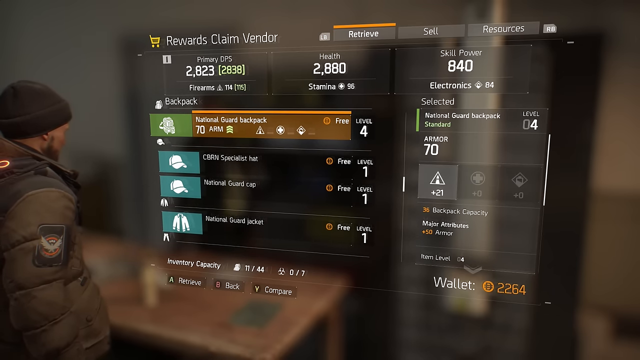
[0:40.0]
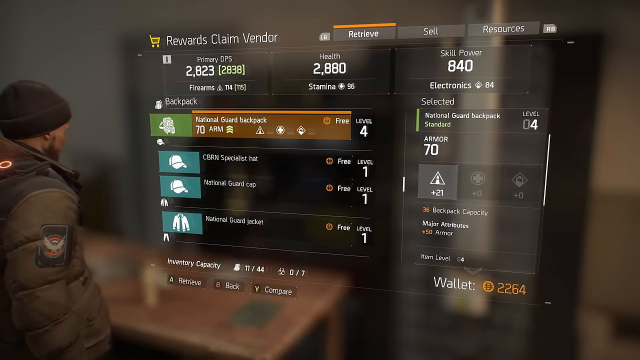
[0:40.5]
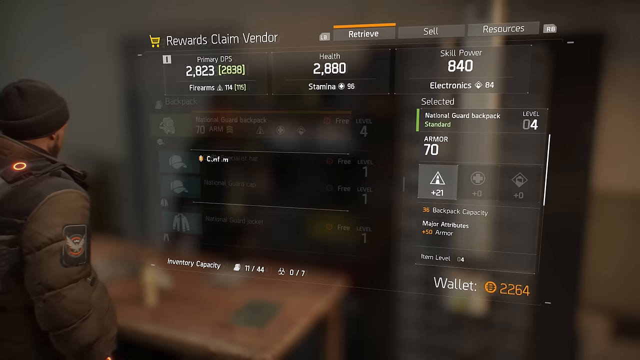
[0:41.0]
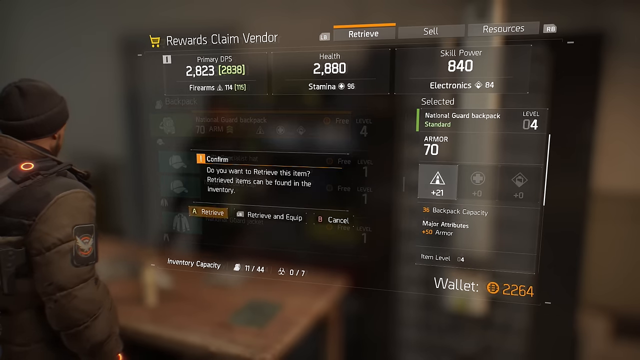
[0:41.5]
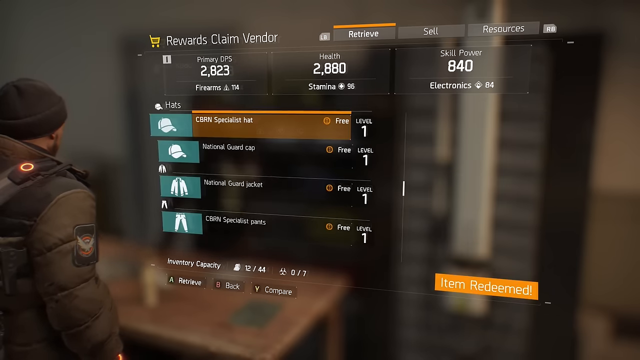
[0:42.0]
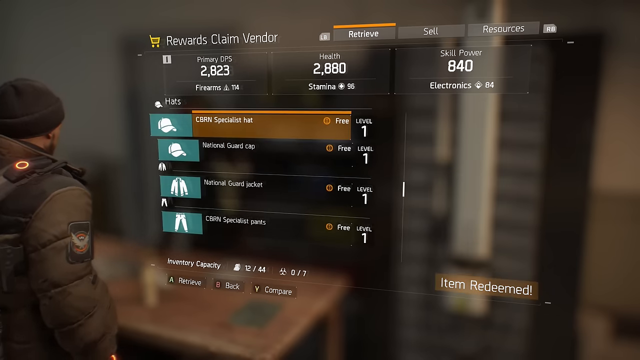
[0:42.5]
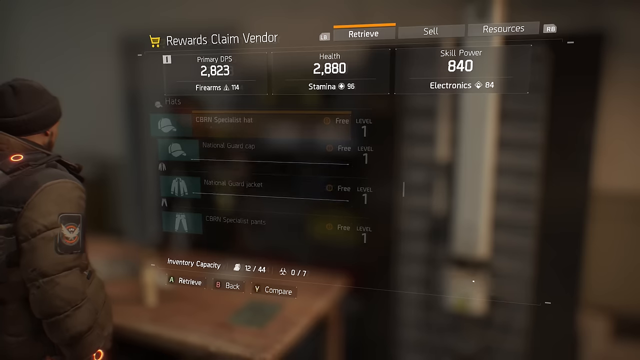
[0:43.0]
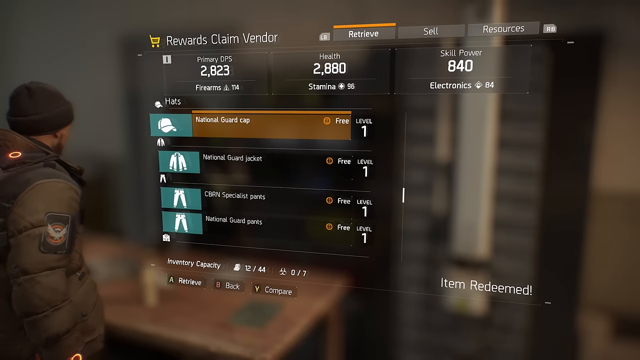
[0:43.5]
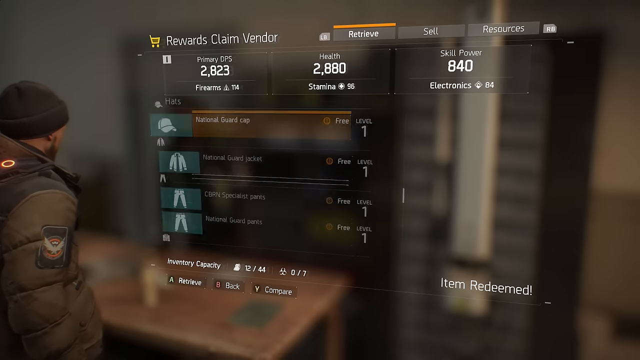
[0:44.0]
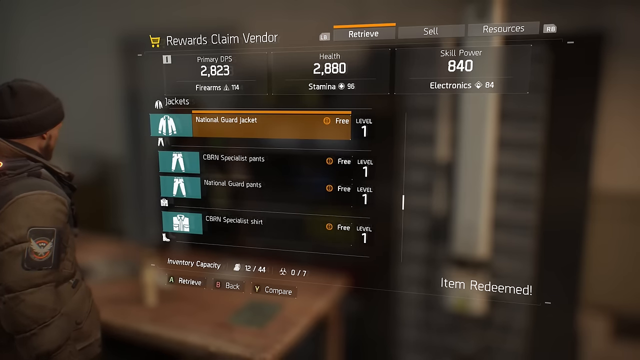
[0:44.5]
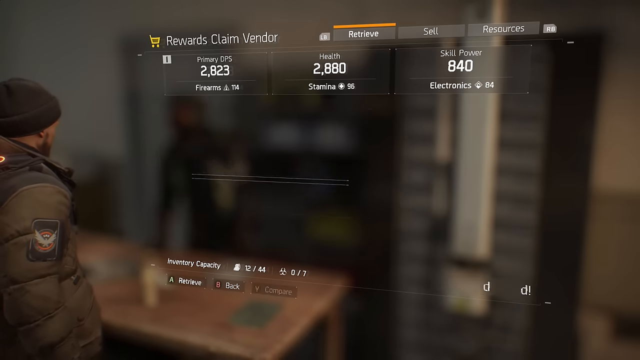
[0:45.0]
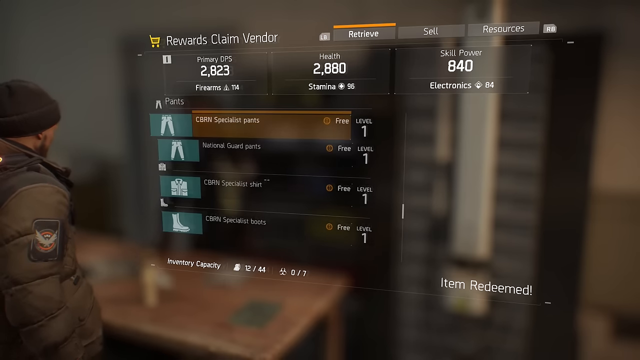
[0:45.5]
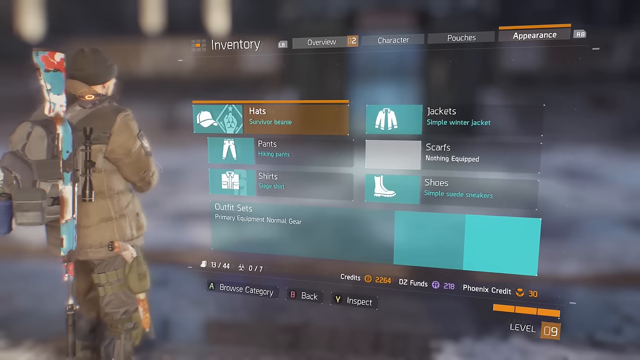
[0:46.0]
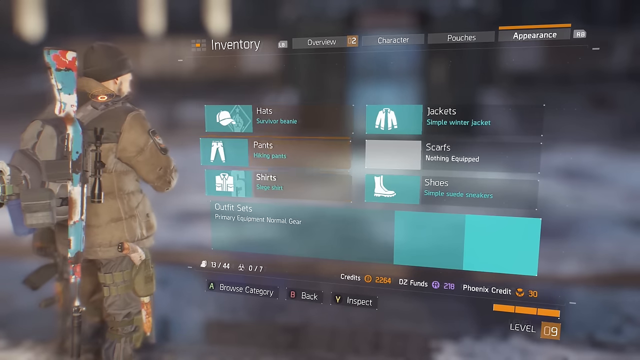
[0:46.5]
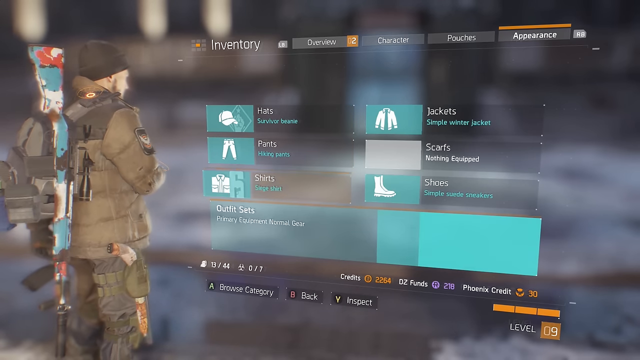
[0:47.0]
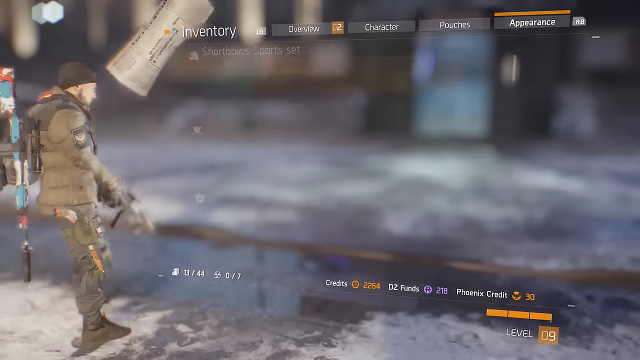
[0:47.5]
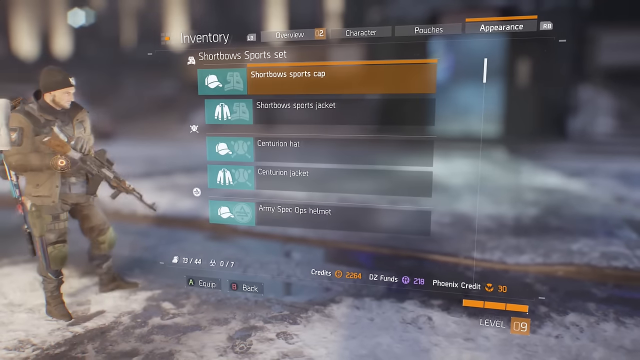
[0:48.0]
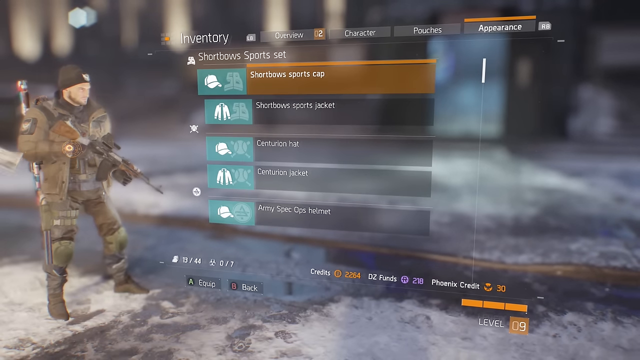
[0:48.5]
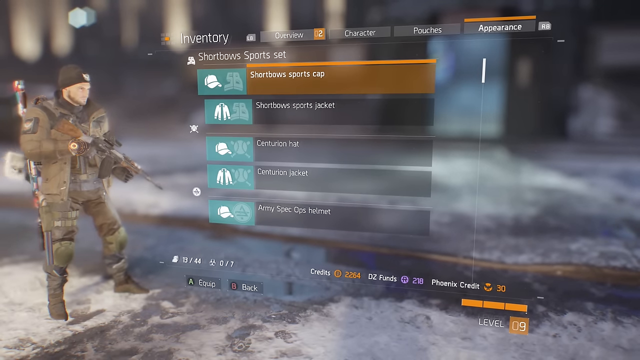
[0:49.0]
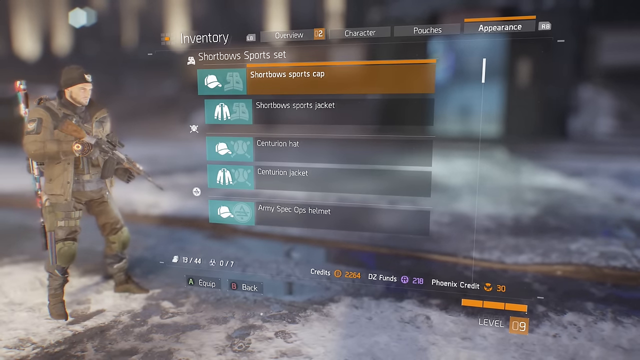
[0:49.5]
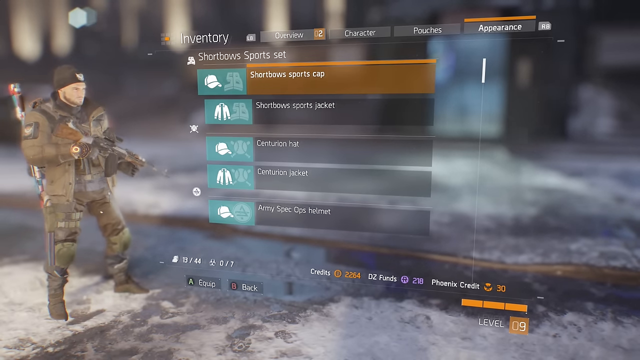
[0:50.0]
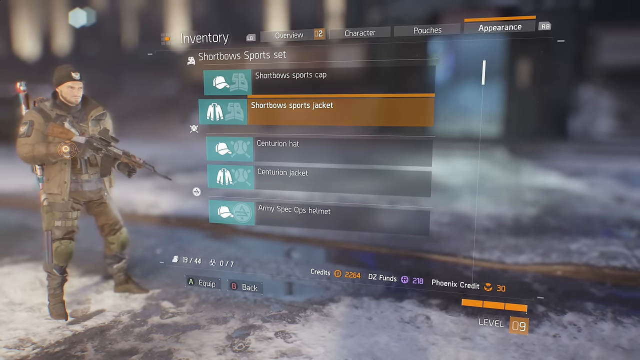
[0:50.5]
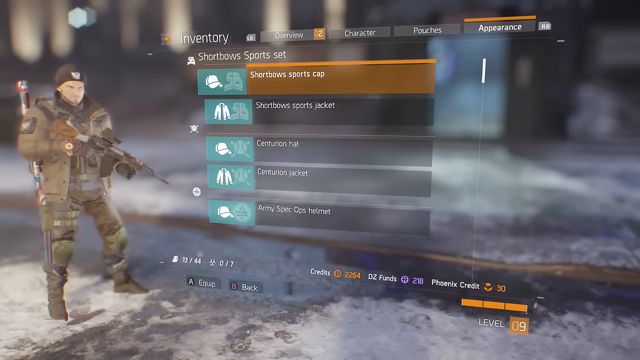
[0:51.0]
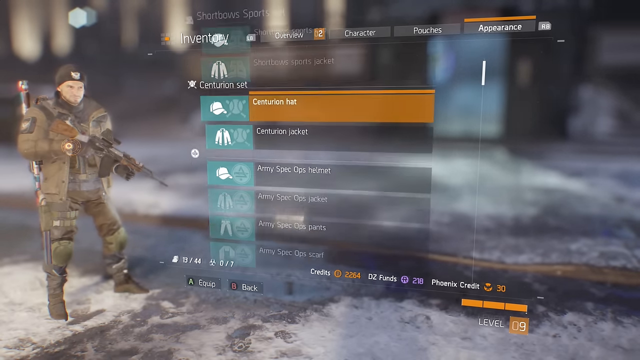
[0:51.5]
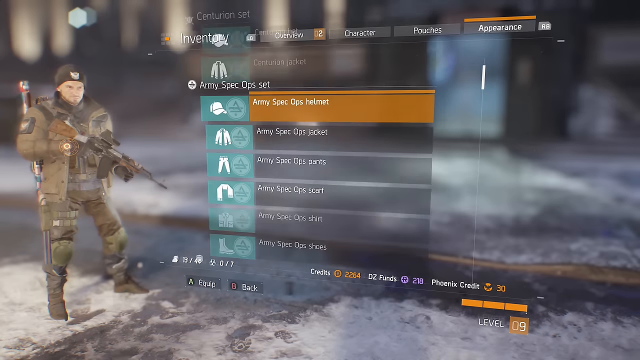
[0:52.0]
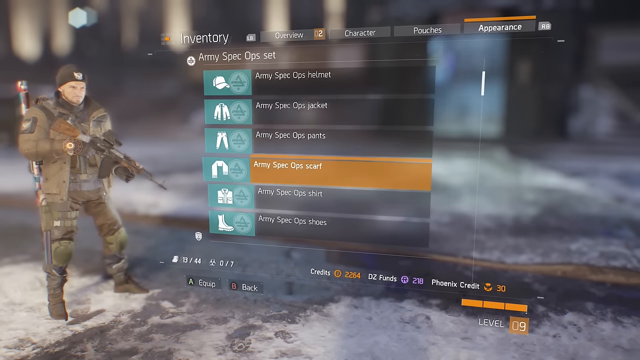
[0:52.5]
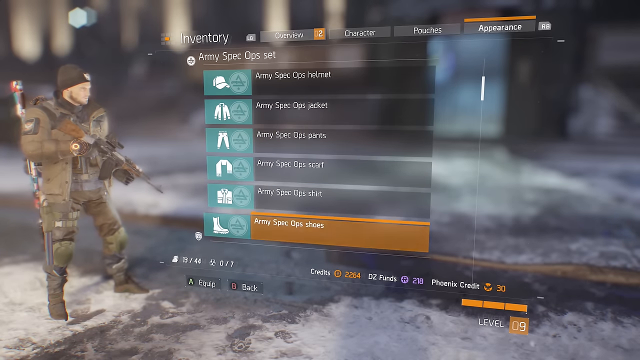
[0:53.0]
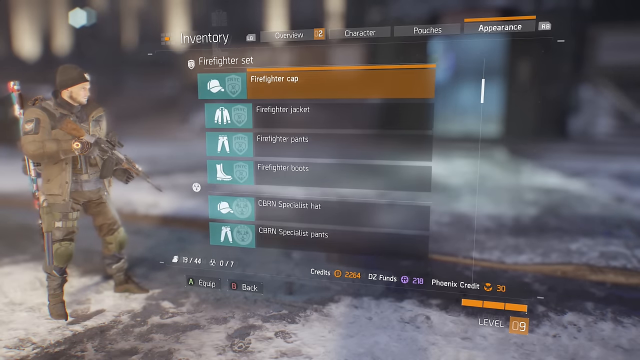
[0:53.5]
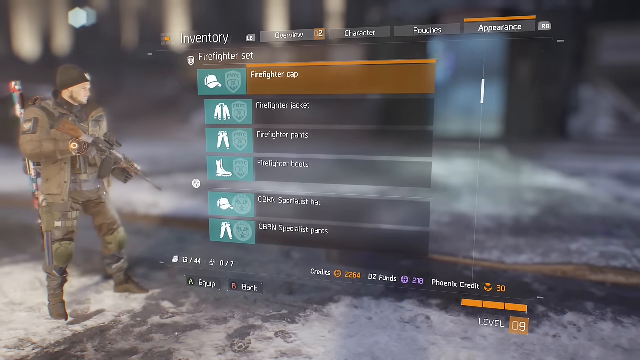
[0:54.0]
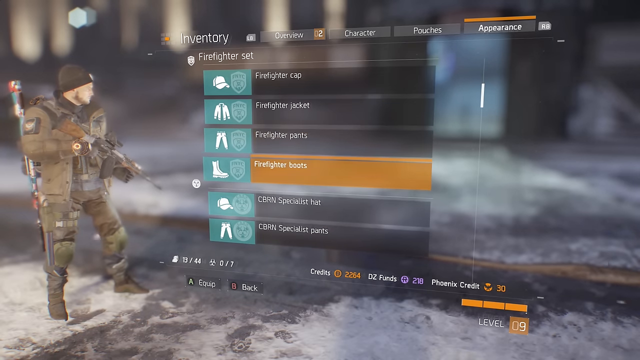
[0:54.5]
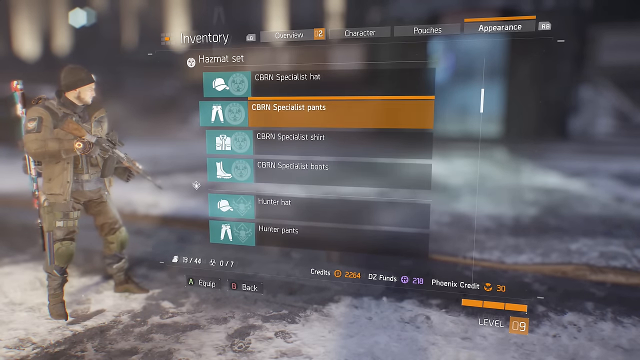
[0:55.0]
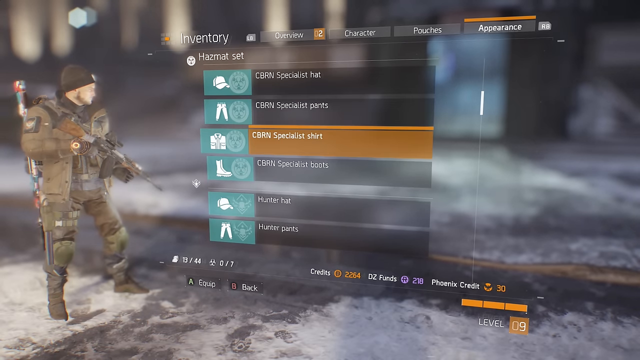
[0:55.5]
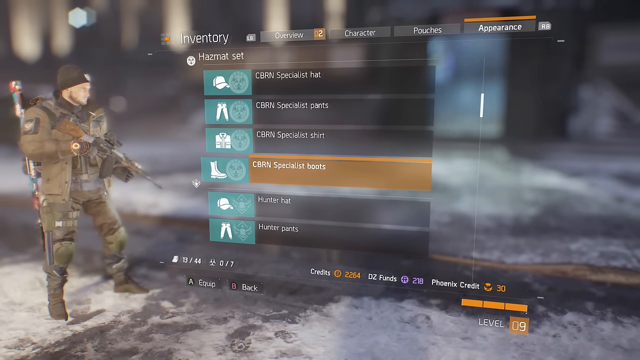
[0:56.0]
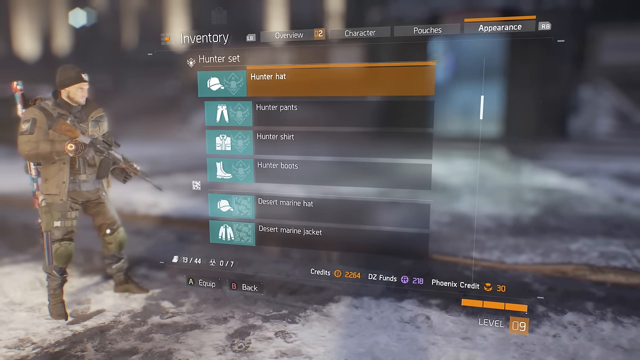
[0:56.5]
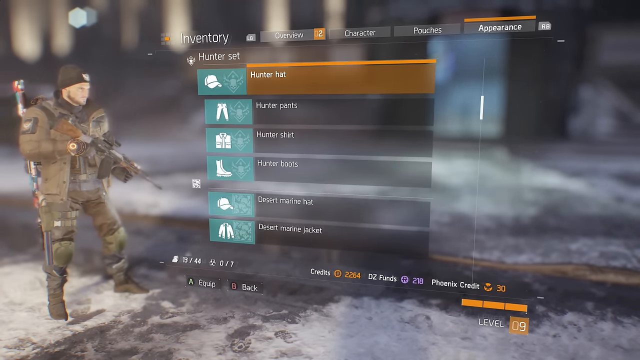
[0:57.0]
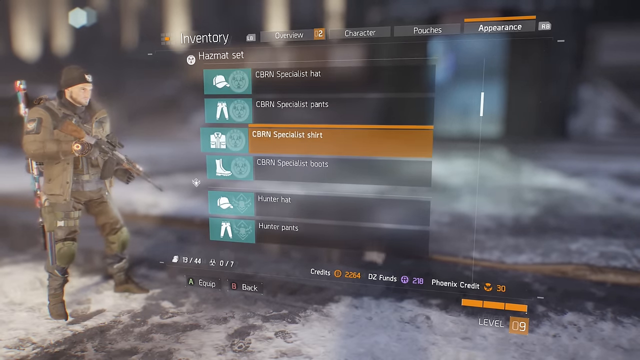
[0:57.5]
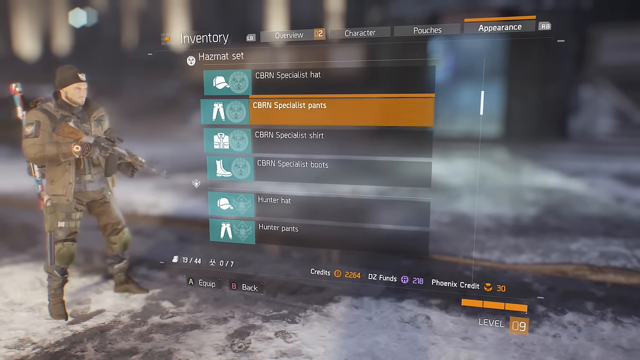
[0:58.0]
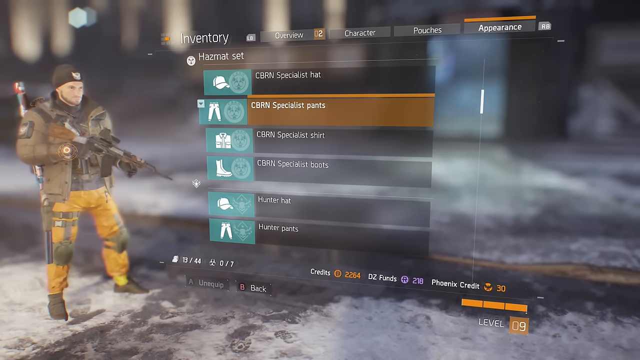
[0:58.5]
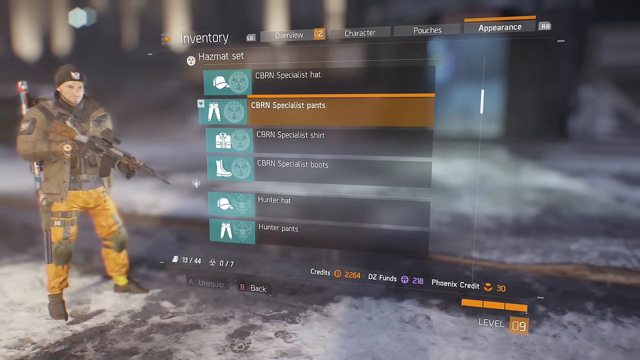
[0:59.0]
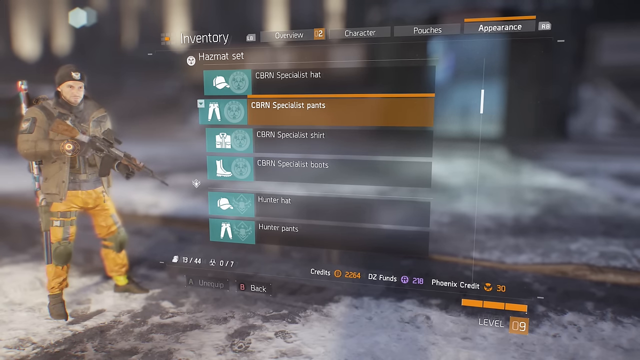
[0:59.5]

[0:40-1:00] The menu highlights the National Guard Backpack and moves to several other items. The character is then seen standing with the gun in a downward position. In the menu, the short bows sports set is open with the short bows sports cap highlighted. The menu scrolls between a few items and then goes down into clothing, moving up and down a little to some specialist pants, a hat, a cap and a jacket. It then goes further into the clothing and scrolls through all the different shoes, pants, shirts and hats, with everything being customized for the character to wear.